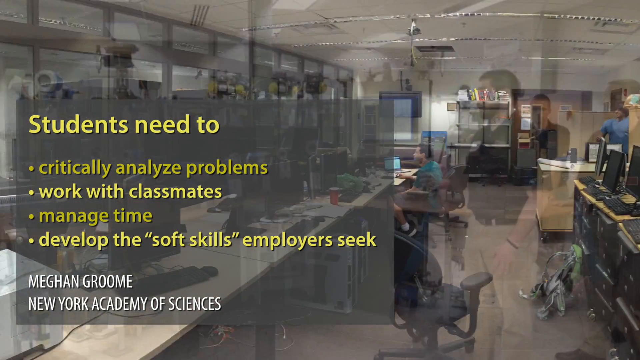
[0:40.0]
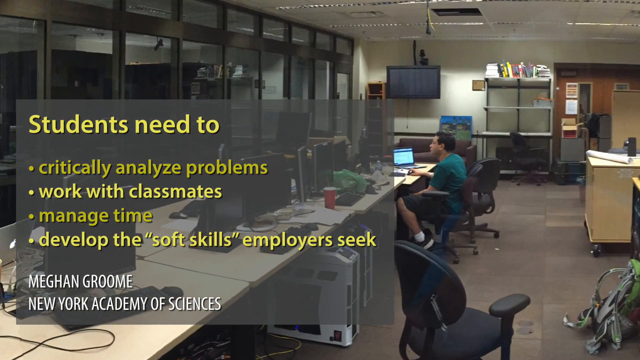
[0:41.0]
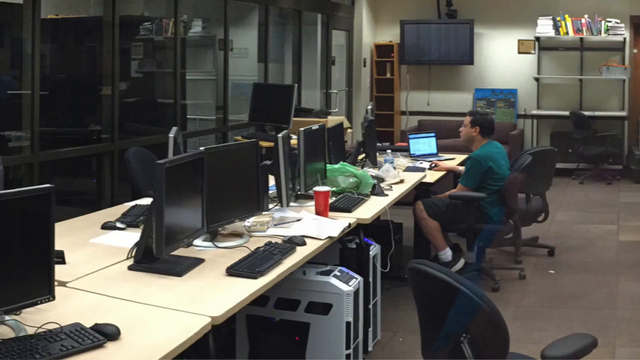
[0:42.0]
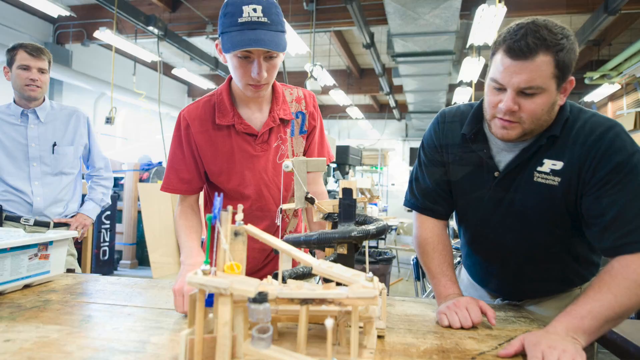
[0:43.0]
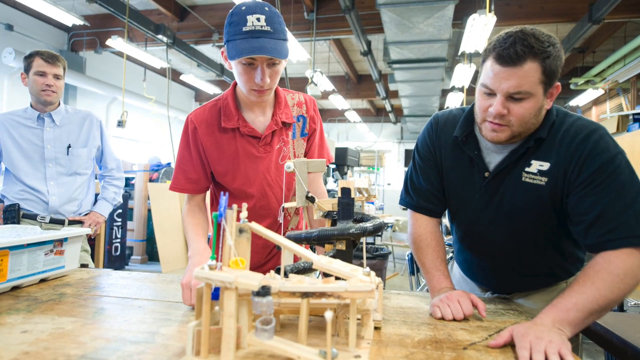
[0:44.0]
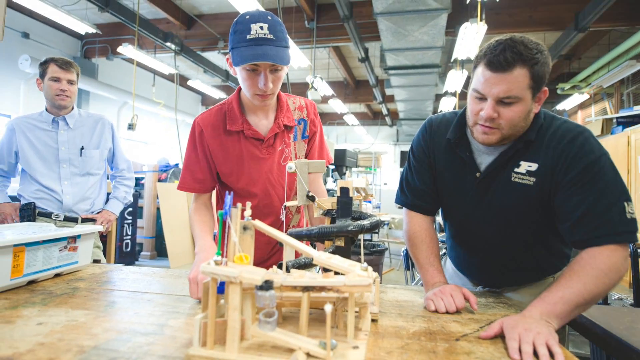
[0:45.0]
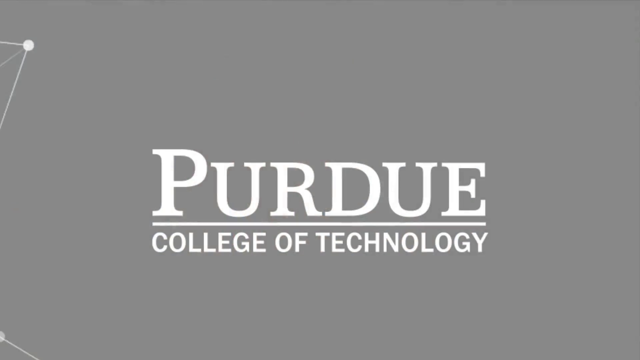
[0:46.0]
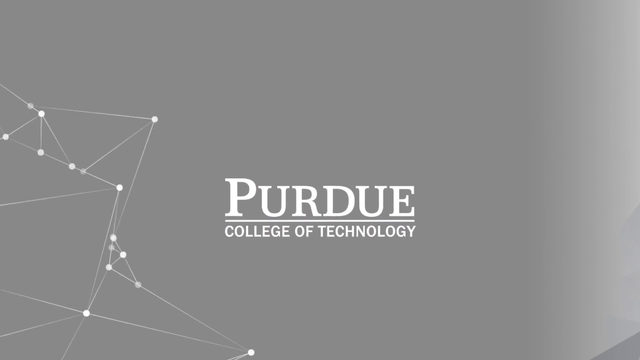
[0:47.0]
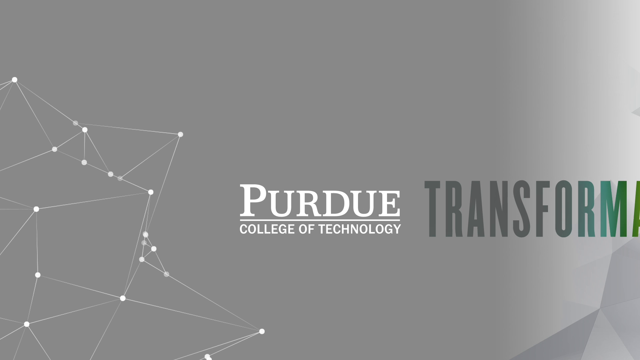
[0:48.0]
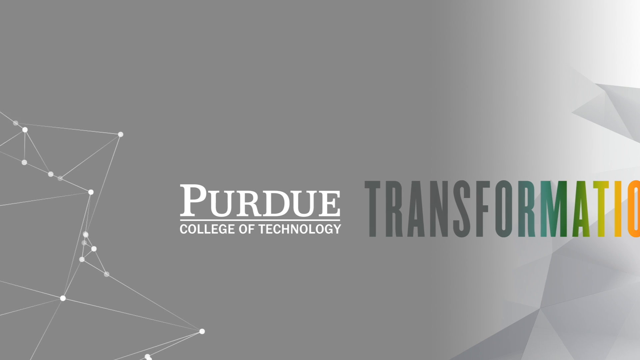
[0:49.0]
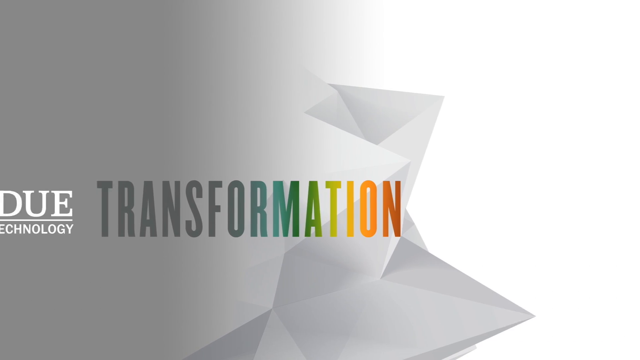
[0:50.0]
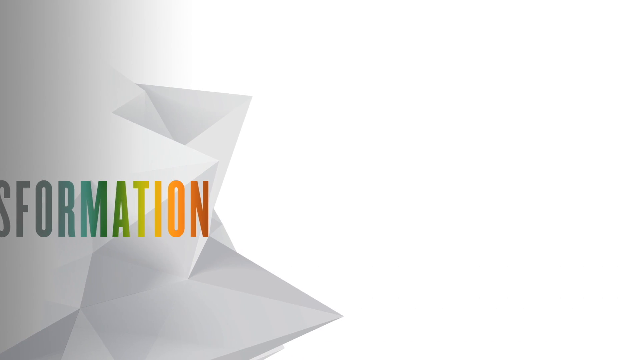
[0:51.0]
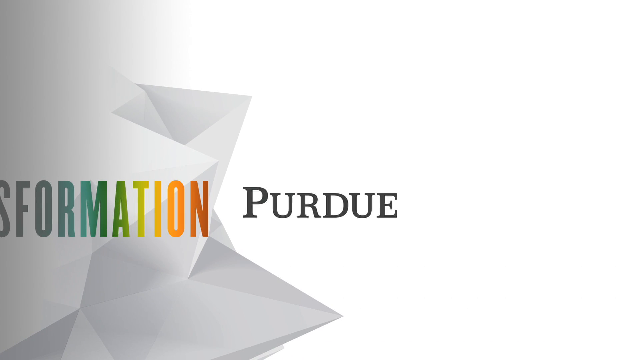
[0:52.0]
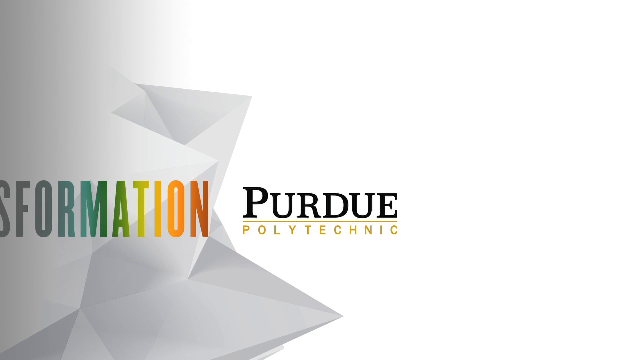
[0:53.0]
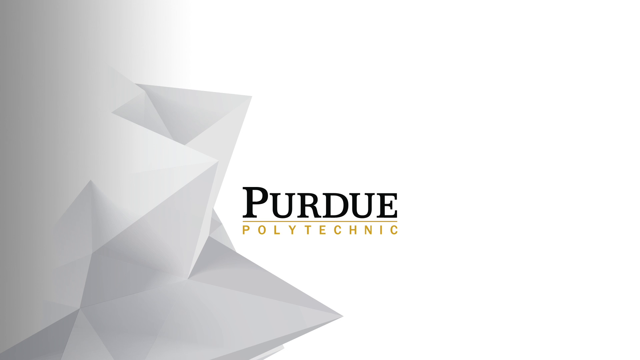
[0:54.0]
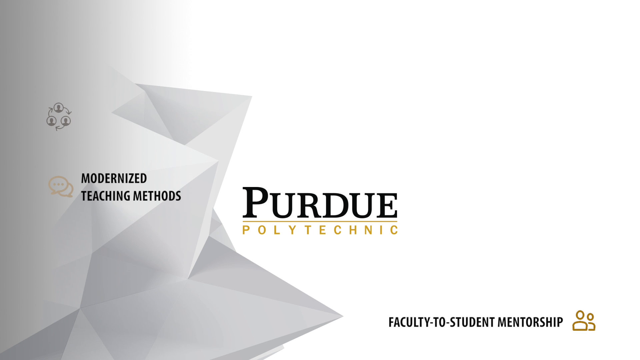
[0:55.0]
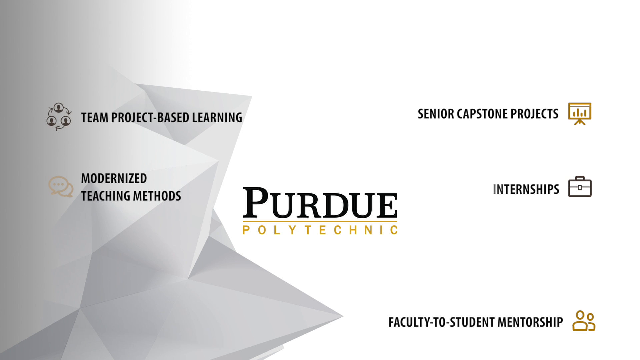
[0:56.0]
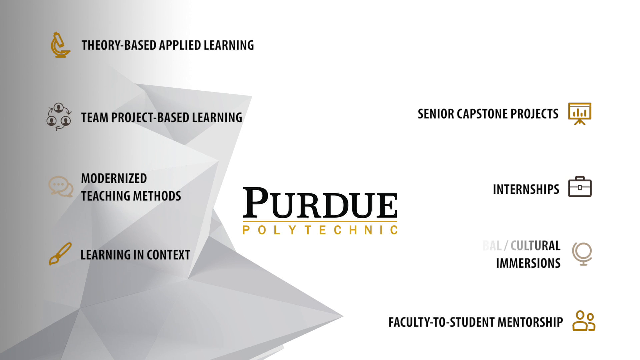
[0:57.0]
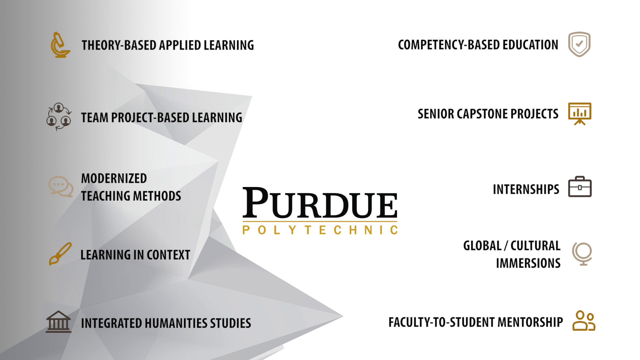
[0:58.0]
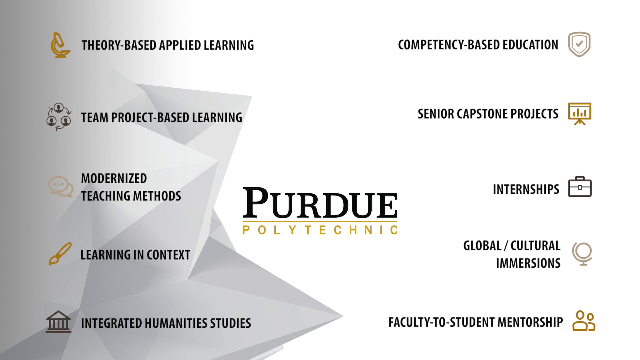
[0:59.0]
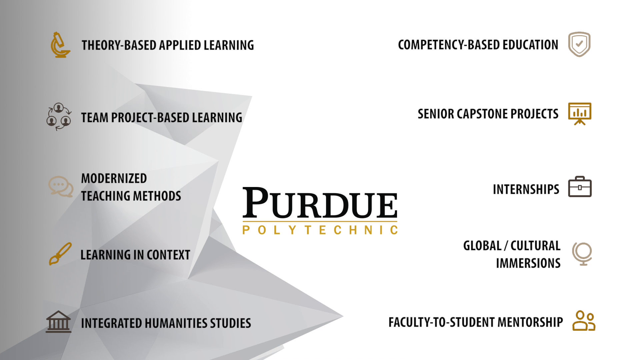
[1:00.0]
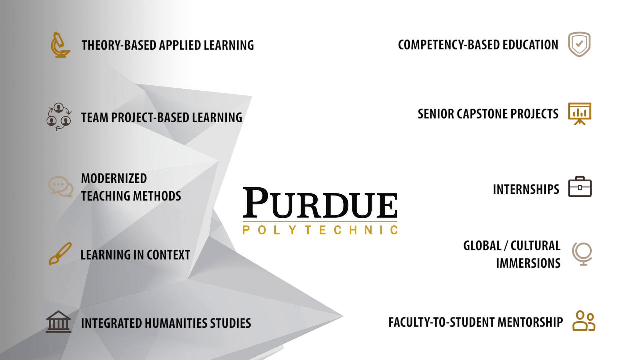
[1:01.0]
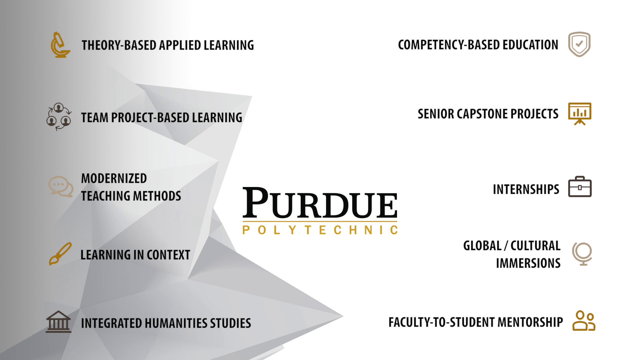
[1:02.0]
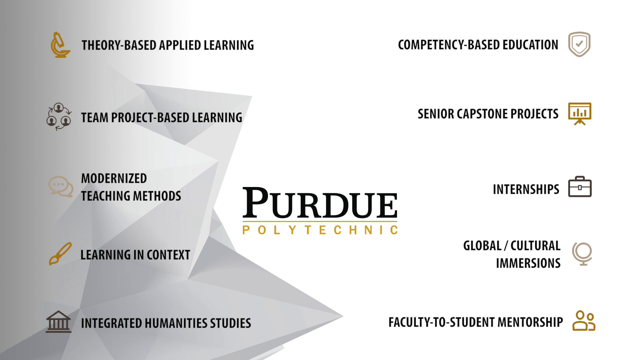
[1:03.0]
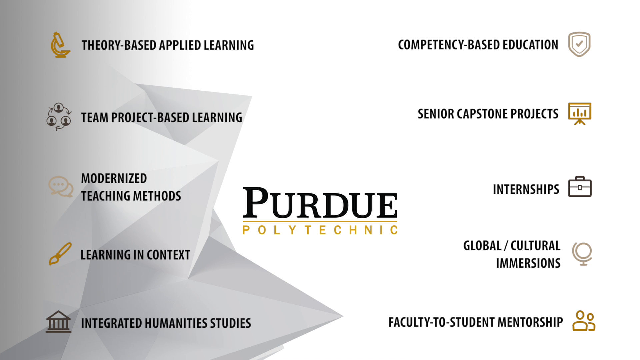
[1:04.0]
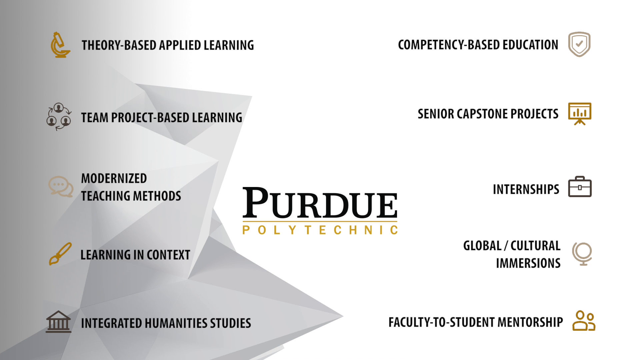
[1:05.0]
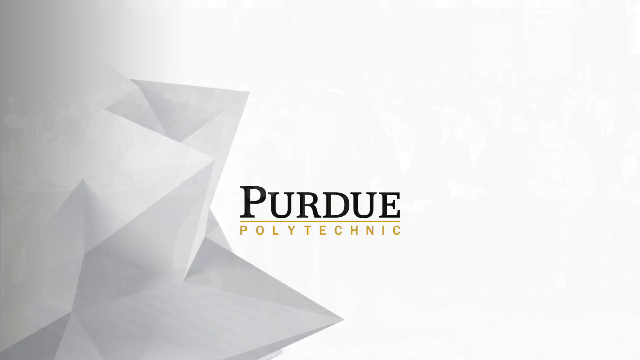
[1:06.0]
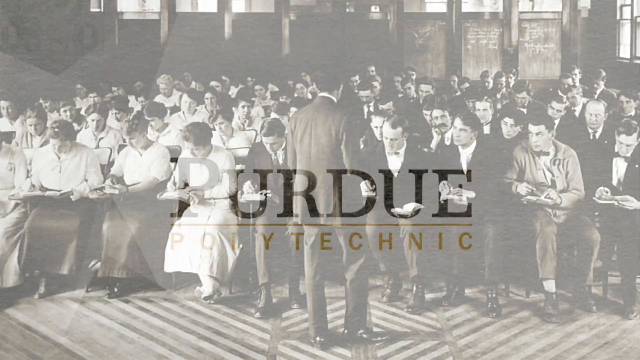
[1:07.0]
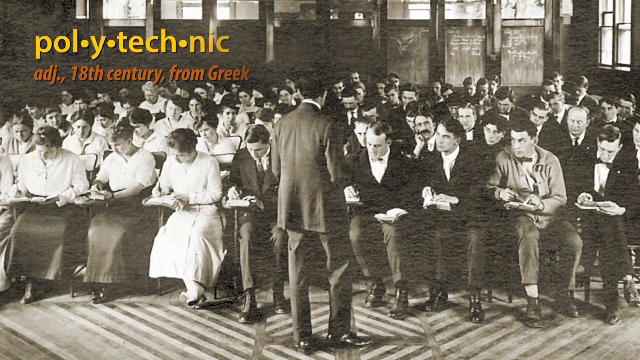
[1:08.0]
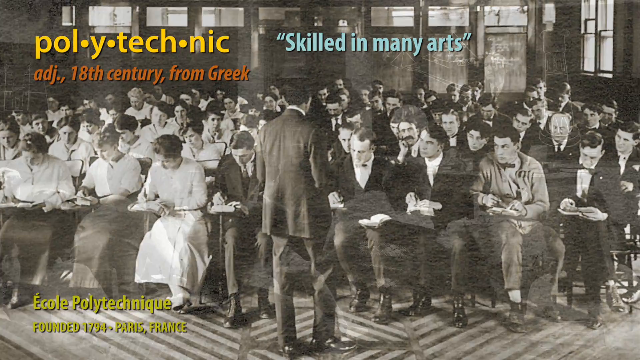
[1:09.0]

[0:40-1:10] Photos of many students appear in the background along with a logo of Purdue College of Technology. The topic is transformation: Purdue College of Technology is transformed into Purdue Polytechnic. A list of its features appears: team-project-based learning, modern teaching methods, learning in context, theory-based applied learning, integrated humanities studies, competency-based education, senior capstone projects, internships, global cultural immersion, and faculty-to-student mentorship. The video is an advertisement for the polytechnic. Another slide shows a very old photo of many students, men and women, writing in notebooks or on paper sheets, with an academic teacher in the middle of the photo talking to them in a class. The word "polytechnic" appears with the definition "skilled in many arts," from the 18th century, from Greek.